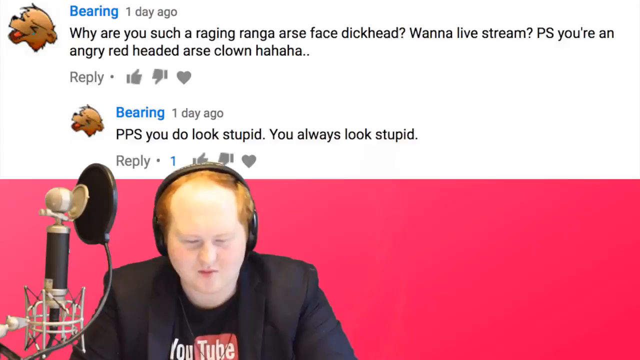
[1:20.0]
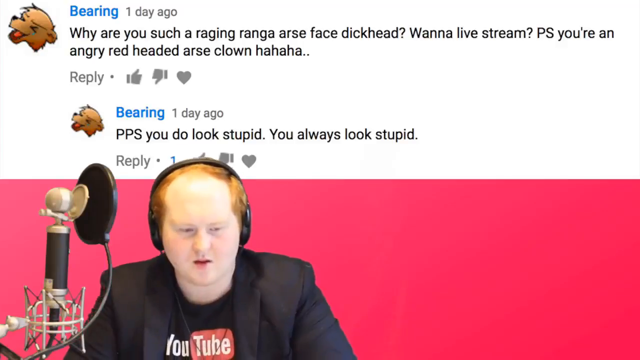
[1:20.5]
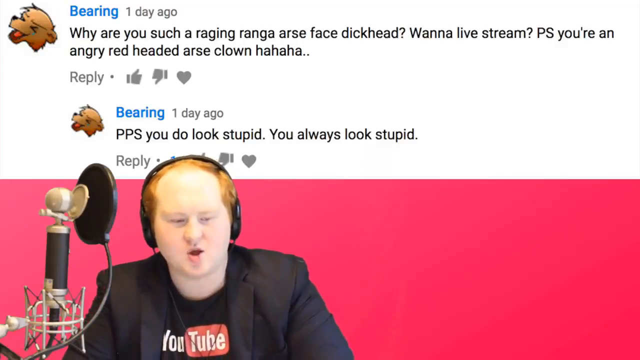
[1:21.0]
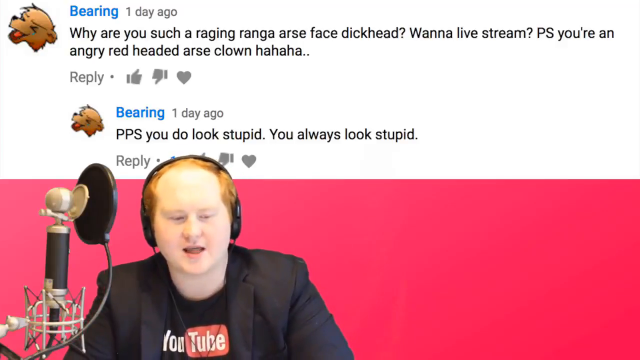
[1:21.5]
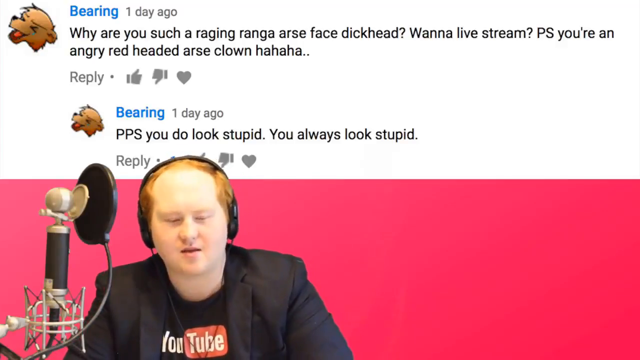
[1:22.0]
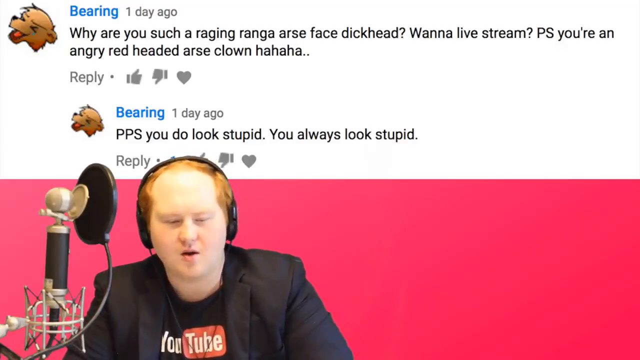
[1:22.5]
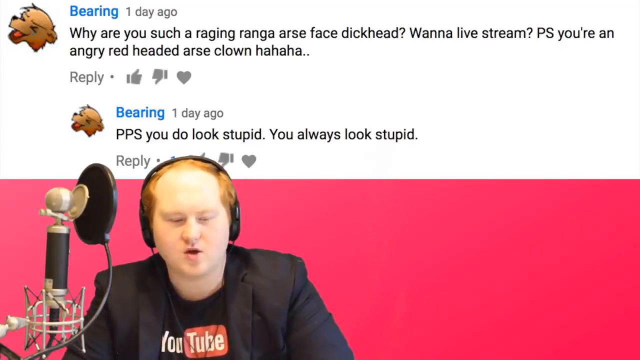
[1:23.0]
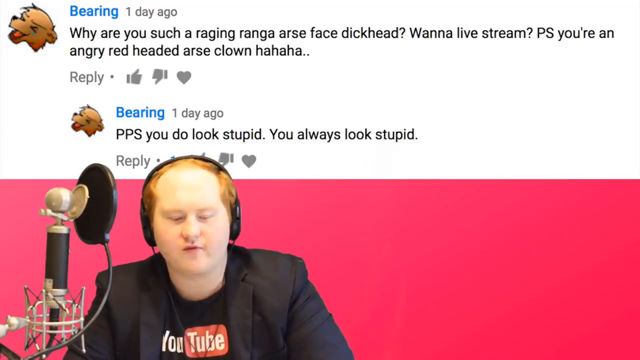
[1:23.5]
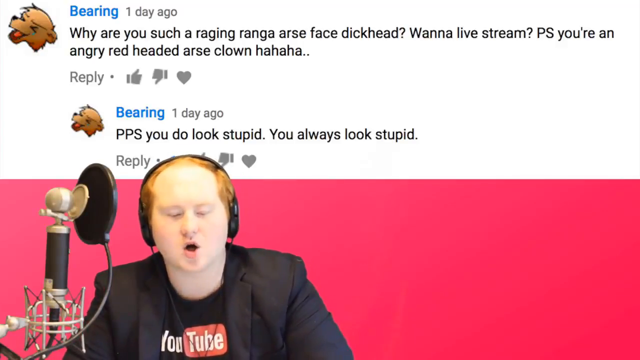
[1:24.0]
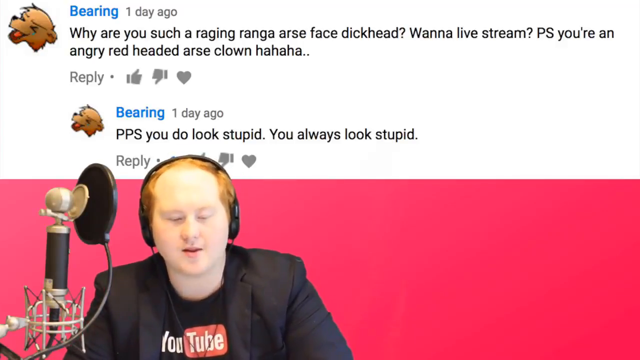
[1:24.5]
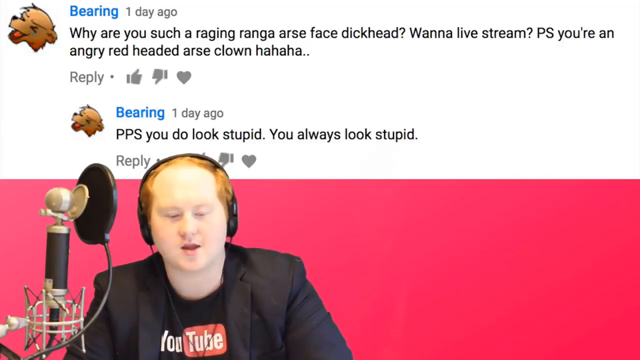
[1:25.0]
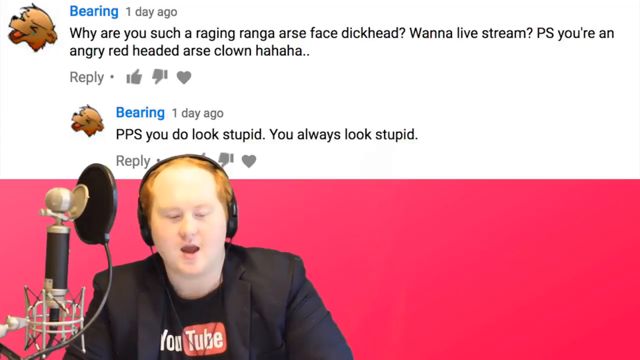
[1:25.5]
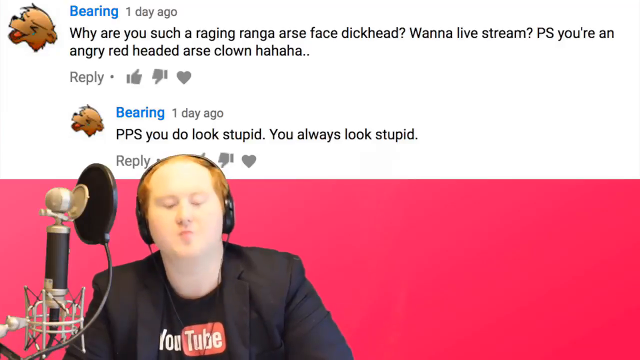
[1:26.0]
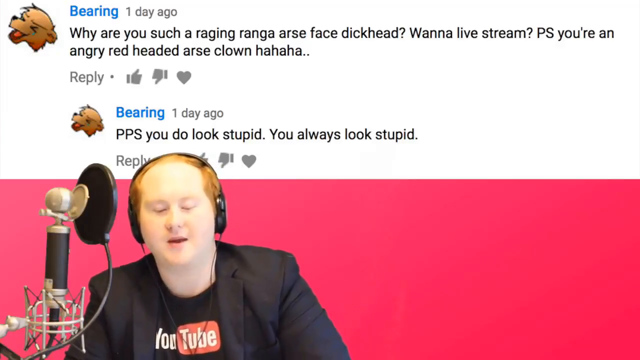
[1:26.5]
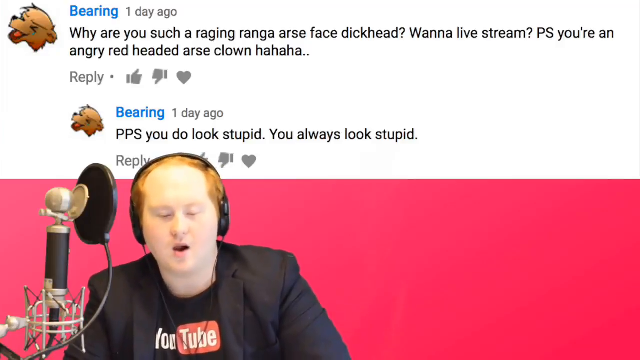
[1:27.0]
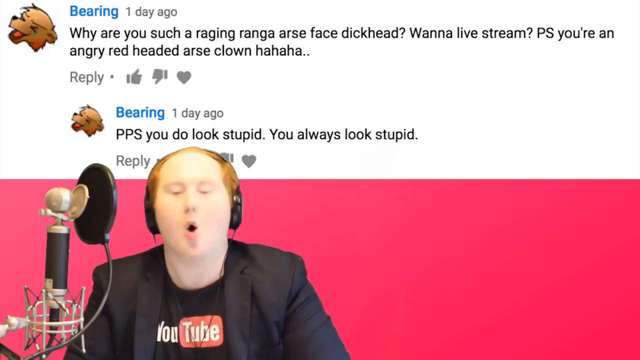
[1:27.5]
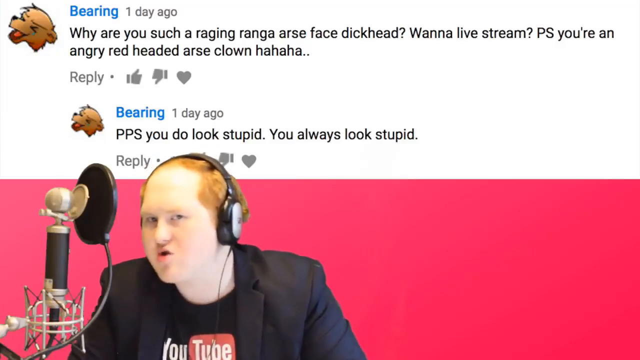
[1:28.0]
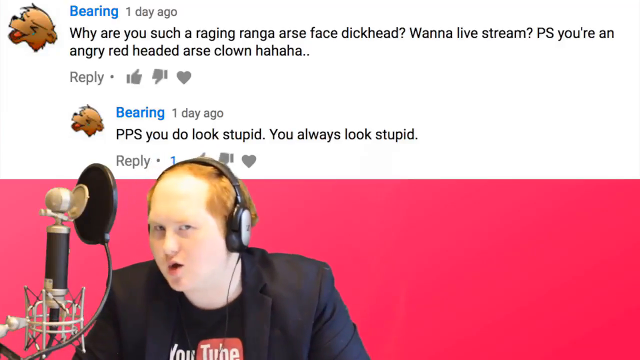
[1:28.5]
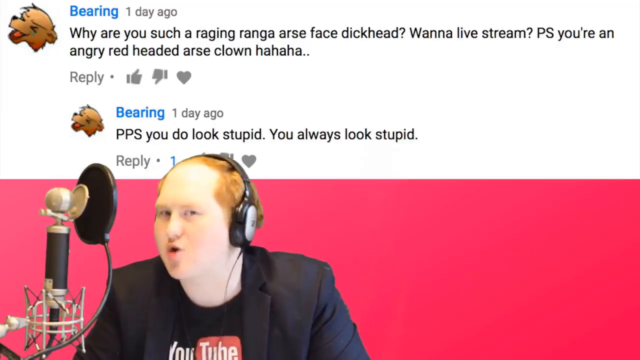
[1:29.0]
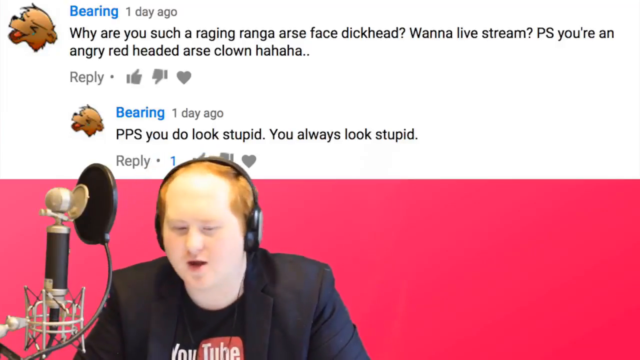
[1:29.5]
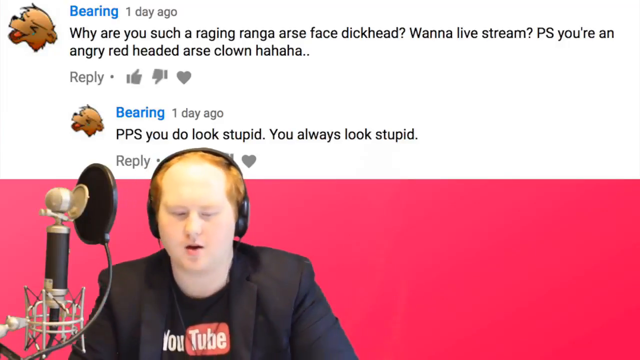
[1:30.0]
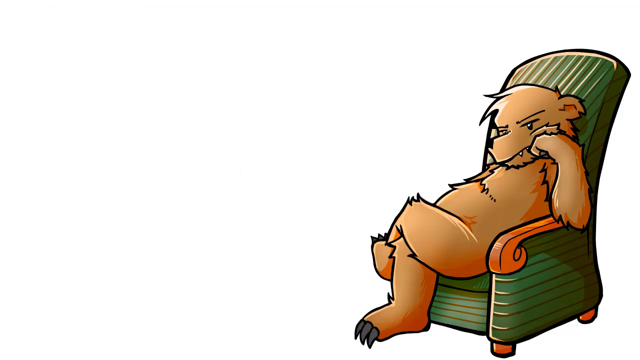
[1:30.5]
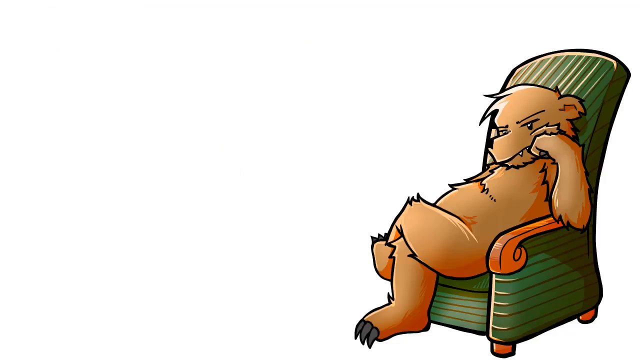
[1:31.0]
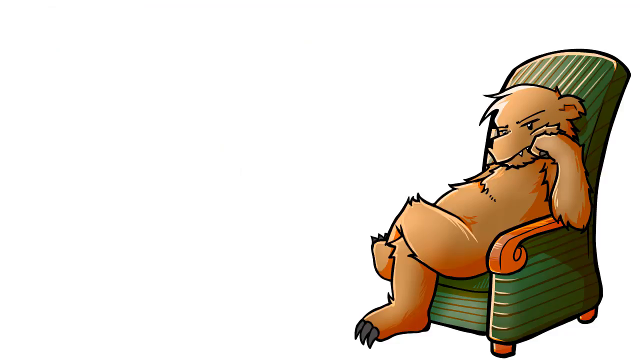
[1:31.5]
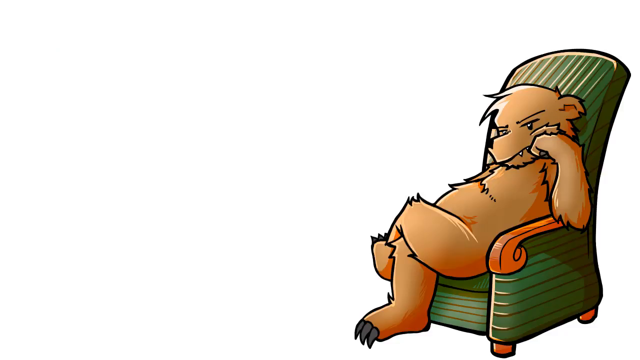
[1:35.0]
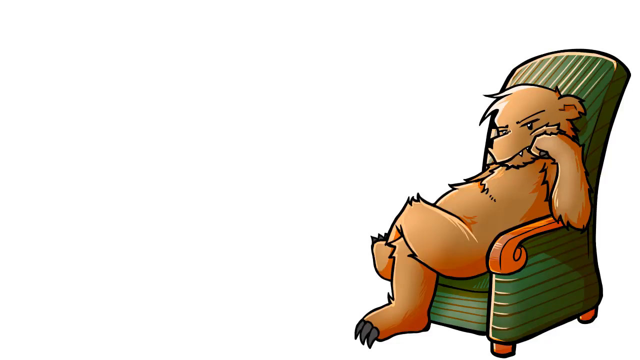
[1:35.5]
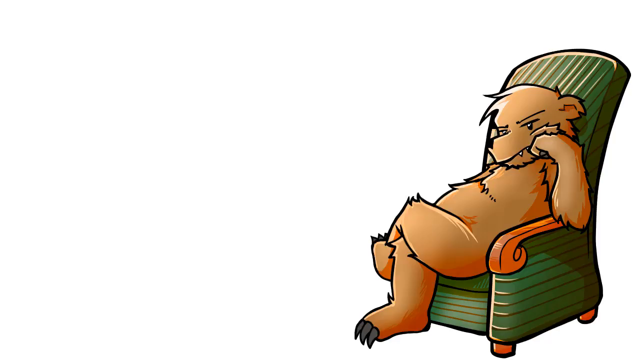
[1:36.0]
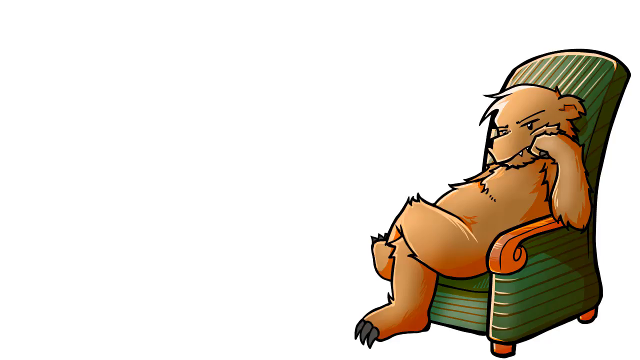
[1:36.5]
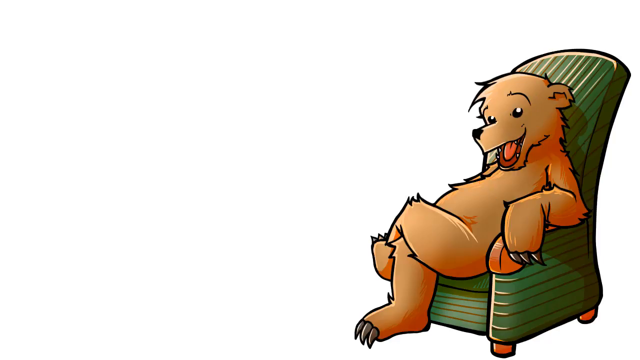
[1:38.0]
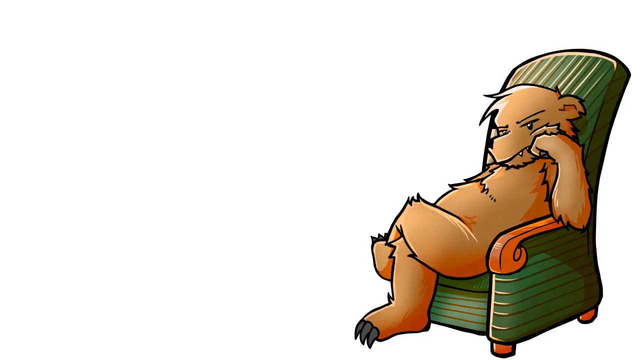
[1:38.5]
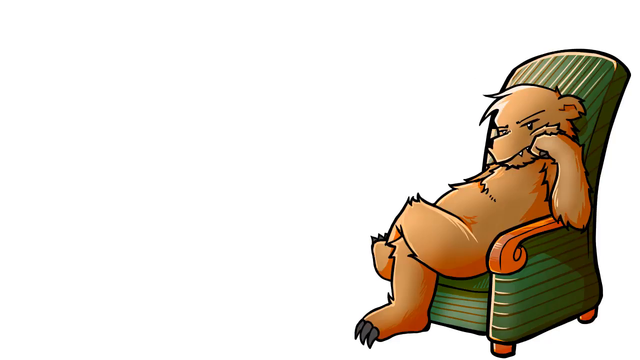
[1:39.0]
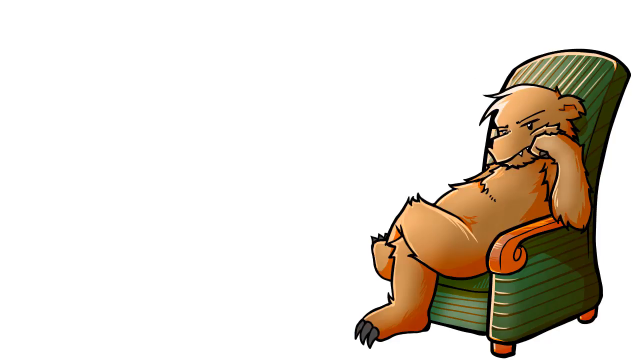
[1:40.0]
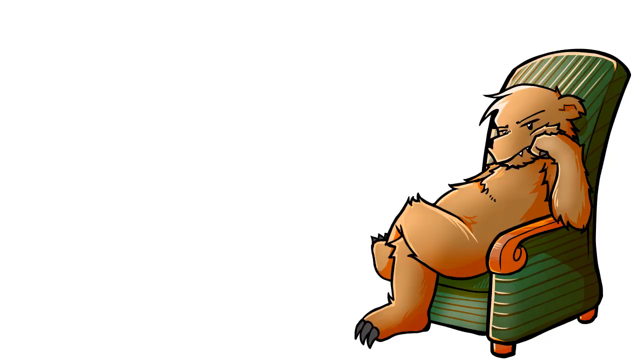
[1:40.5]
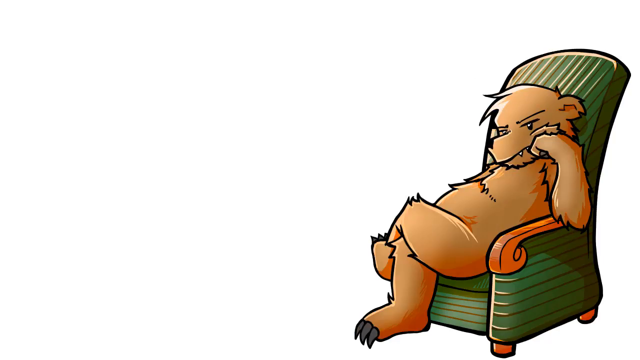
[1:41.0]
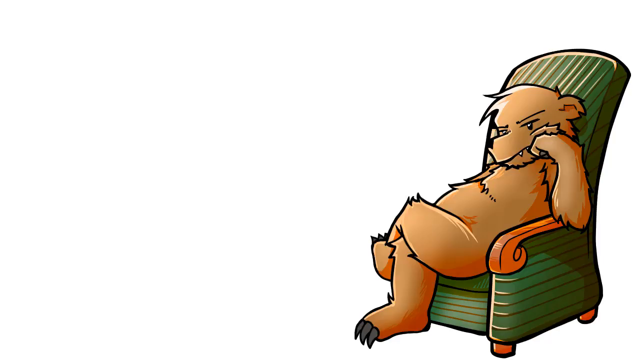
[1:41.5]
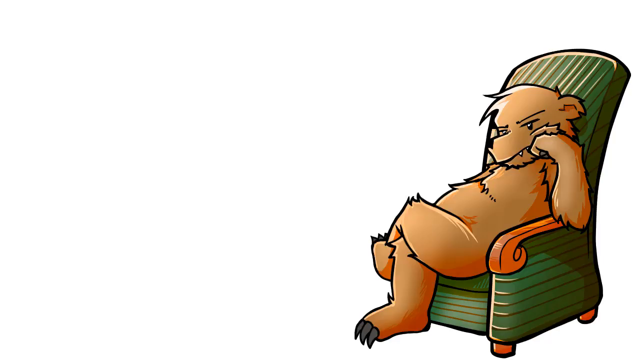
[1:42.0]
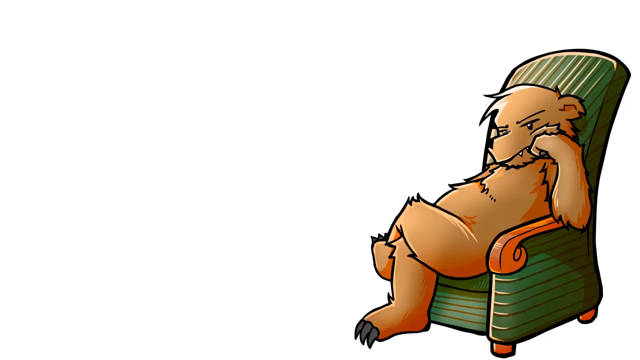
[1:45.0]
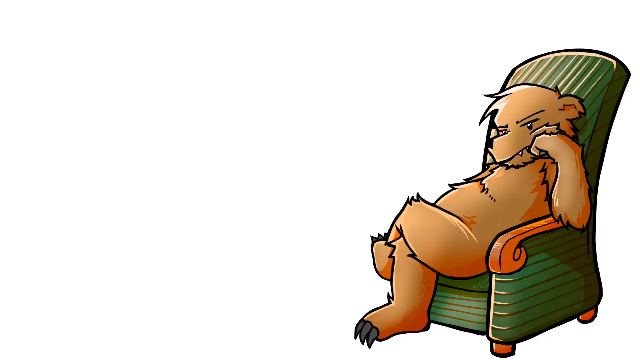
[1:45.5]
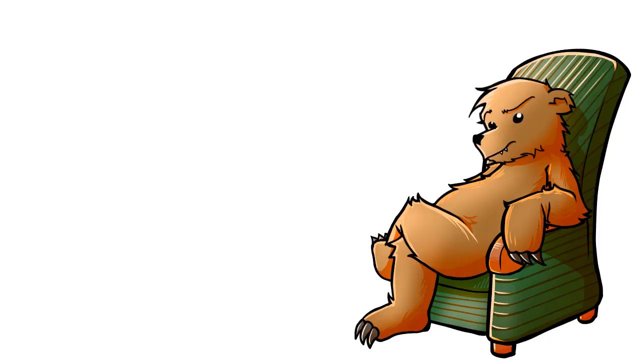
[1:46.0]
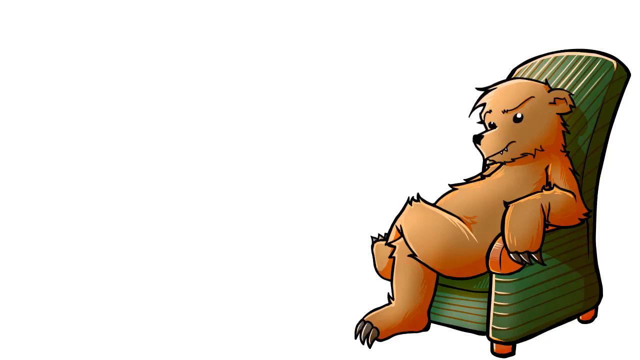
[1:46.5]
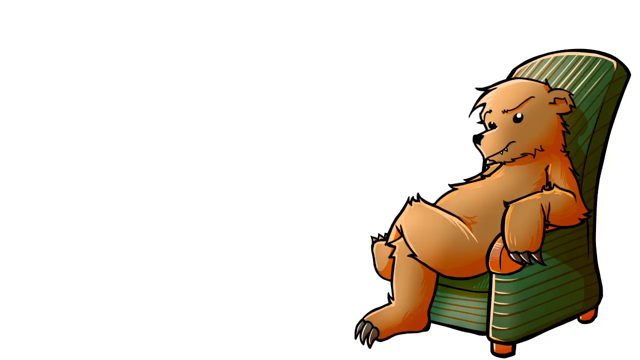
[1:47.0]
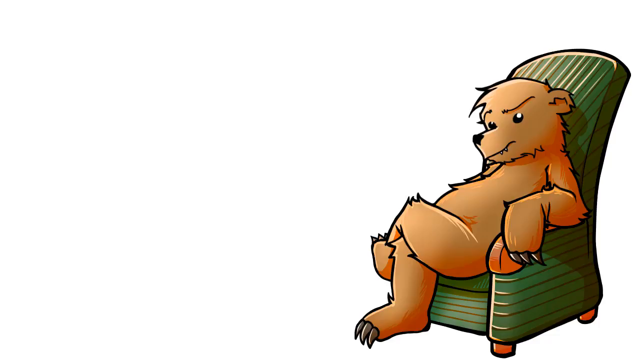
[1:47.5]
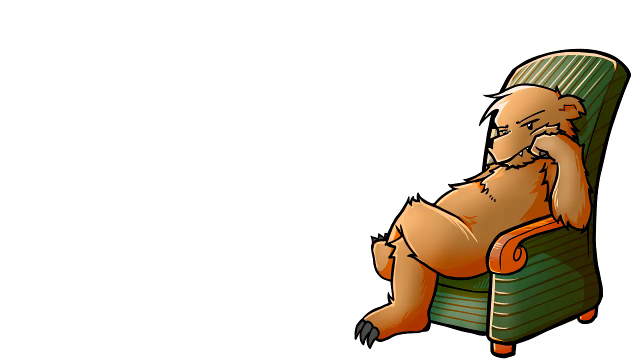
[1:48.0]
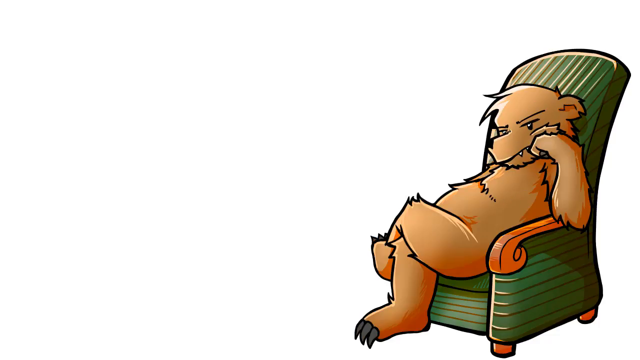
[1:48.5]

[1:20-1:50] The red-haired man looks down at something in front of him, perhaps a screen. Most of his animated motions appear reined in, and he speaks with a sense of control, his head occasionally lilting upward. At one point he turns his head to the right, directly facing the microphone in front of him, with his mouth wide open as he makes animated statements, his eyes looking straight at the camera. The video keeps switching between the red-haired speaker and the bear in the recliner, which now periodically shows a new expression: besides its frustrated positions, the bear opens its mouth wide in a laugh or smile-like expression before returning to its earlier positions and expressions. The structure of the recliner is clearly visible, including brown wooden feet on the bottom corners and simulated lighting reflecting off the green tapestry that makes up the chair.